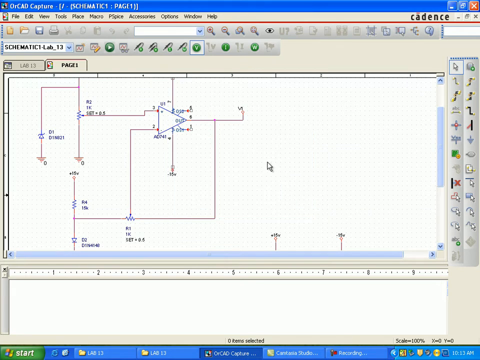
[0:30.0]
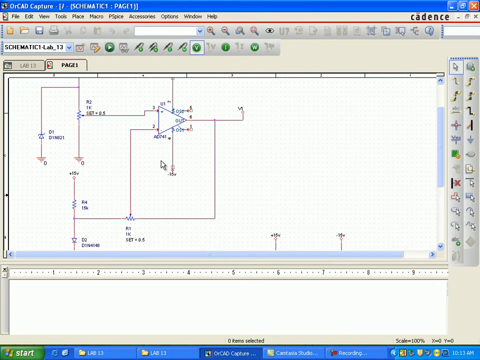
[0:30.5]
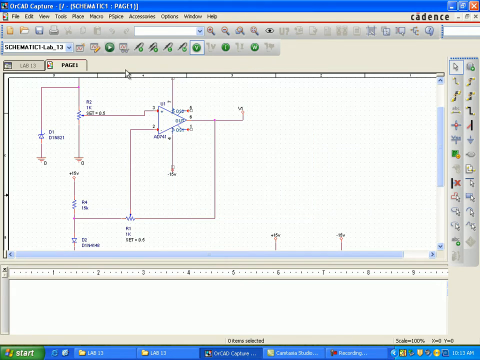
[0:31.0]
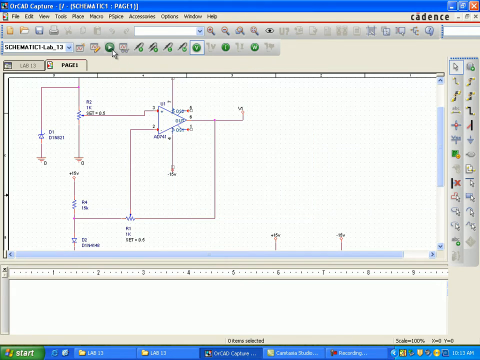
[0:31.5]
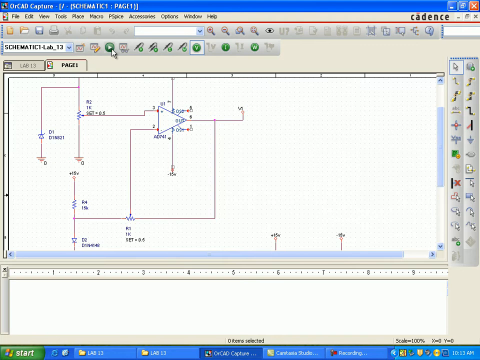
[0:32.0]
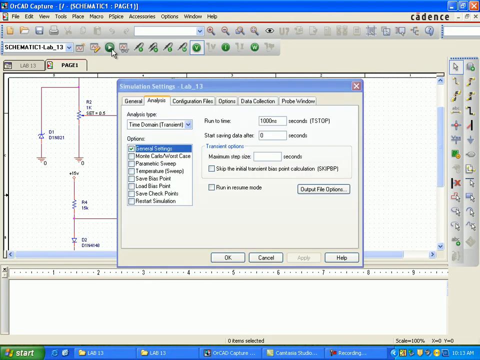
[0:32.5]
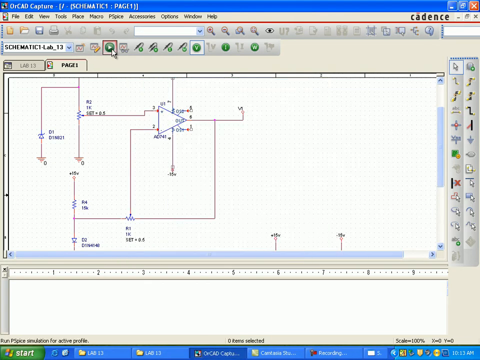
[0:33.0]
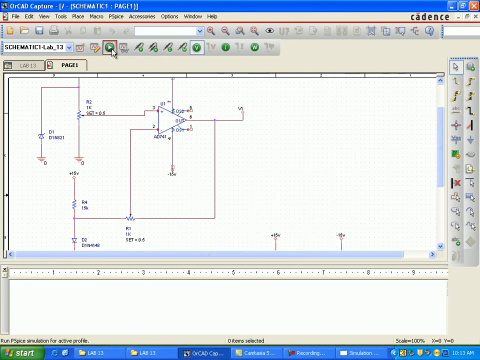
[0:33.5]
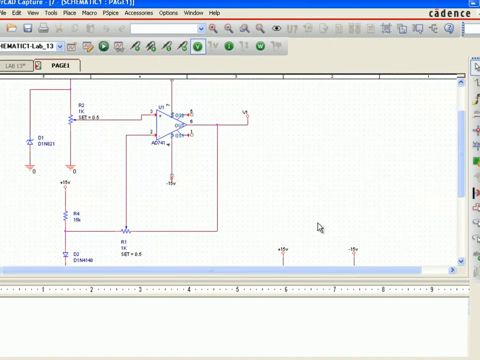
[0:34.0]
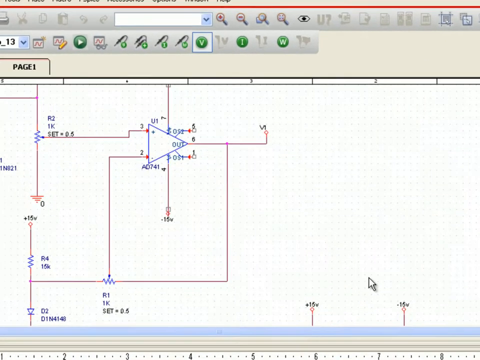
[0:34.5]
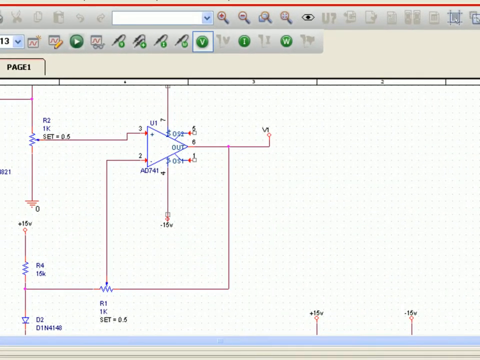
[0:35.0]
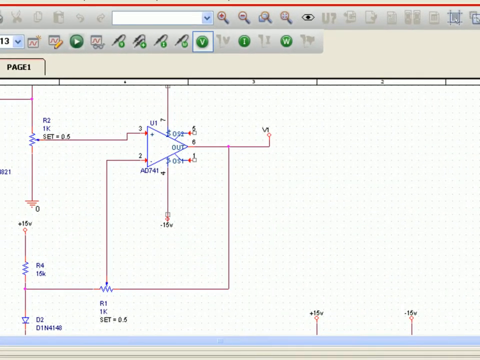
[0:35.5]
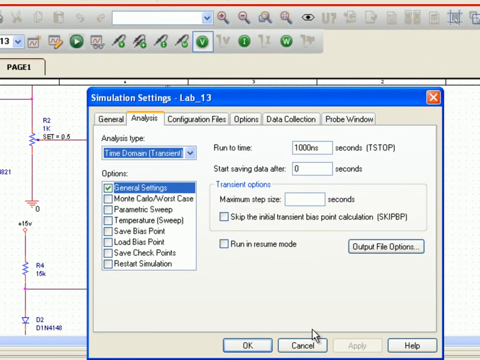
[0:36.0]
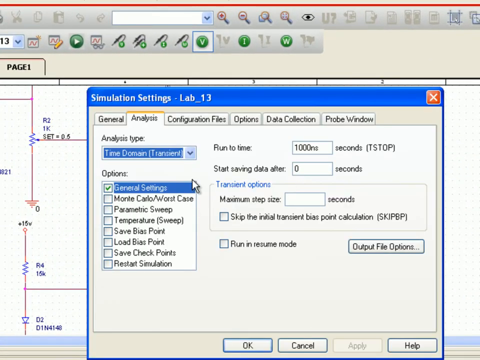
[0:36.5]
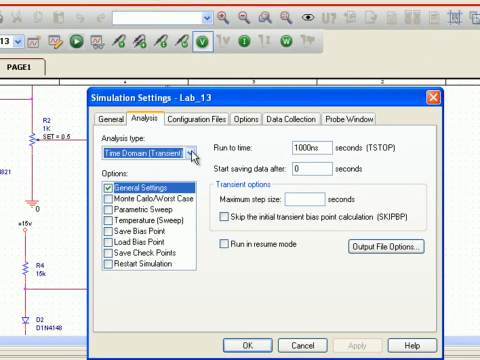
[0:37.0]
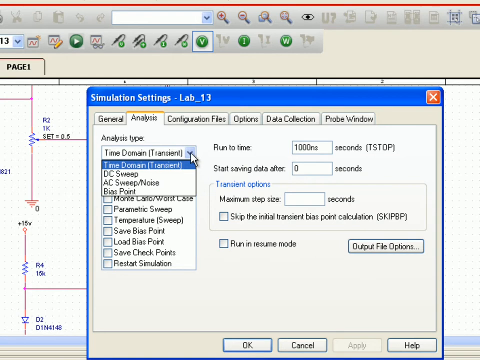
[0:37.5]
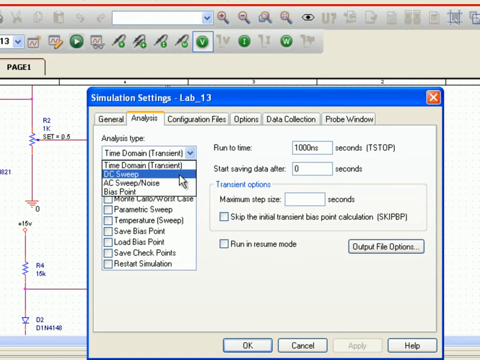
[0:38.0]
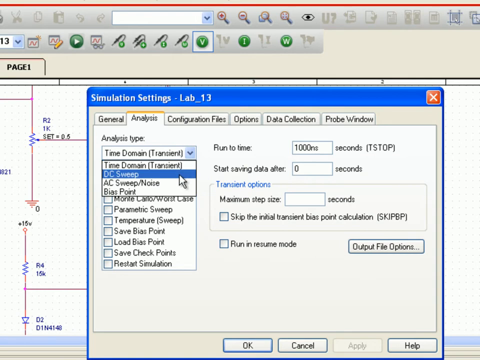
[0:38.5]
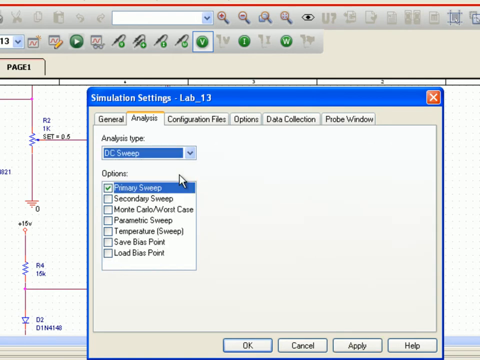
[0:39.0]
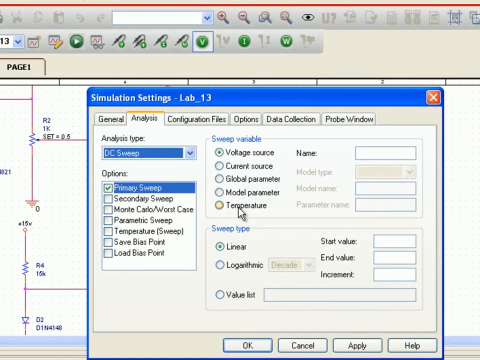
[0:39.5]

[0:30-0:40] The same layout remains on screen. The user clicks a play button at the top, which brings up a simulation settings tab specifically for the newly created Lab 13. They go to a drop-down bar for analysis type and click on DC Sweep. Then they click another button right next to it for a sweep variable and apparently click on temperature.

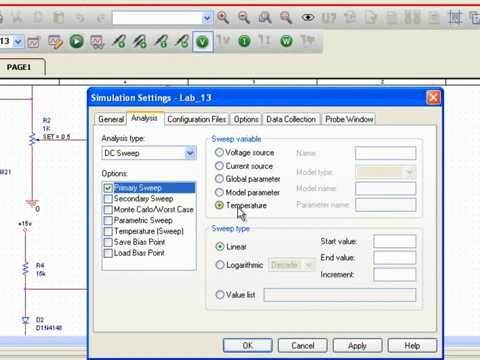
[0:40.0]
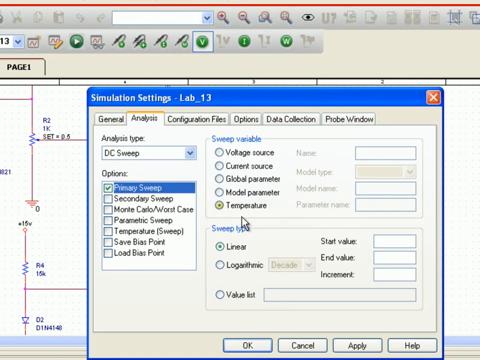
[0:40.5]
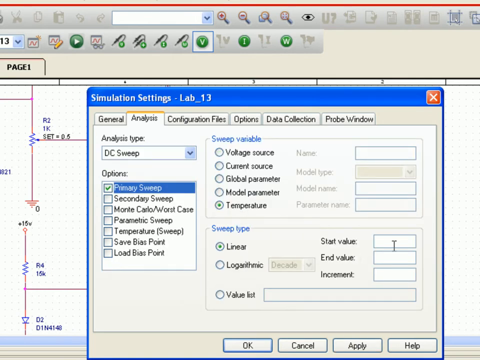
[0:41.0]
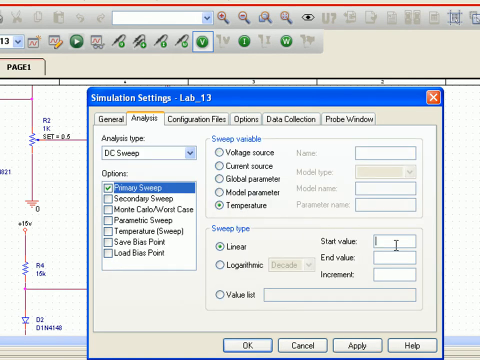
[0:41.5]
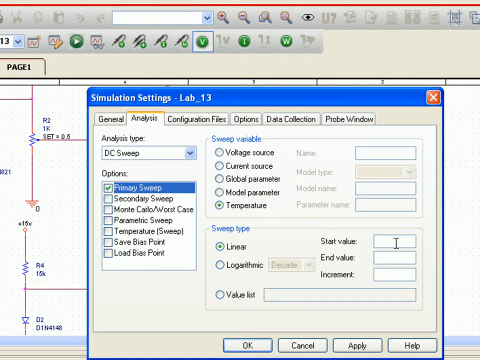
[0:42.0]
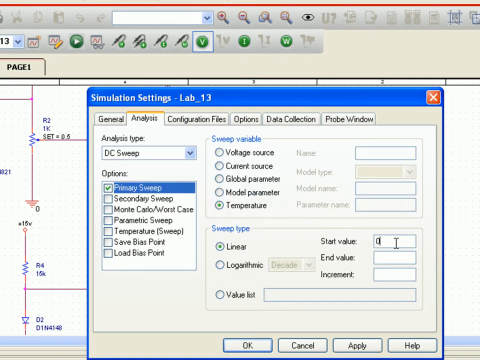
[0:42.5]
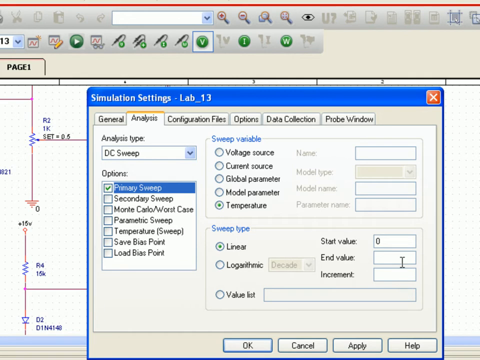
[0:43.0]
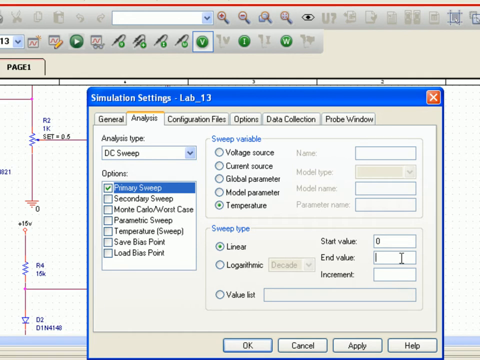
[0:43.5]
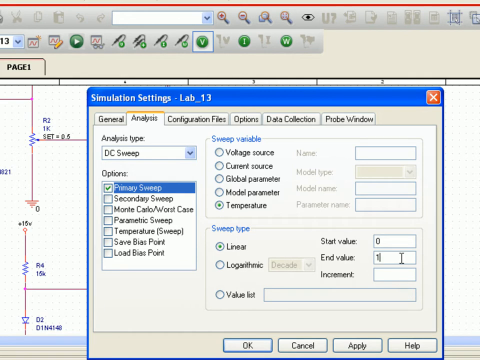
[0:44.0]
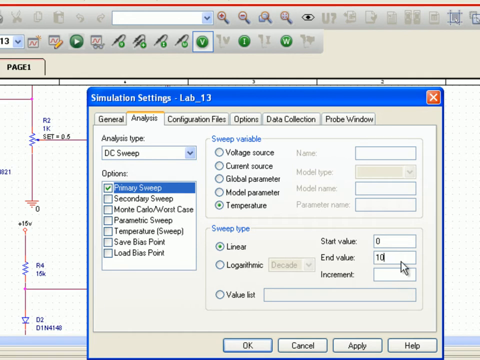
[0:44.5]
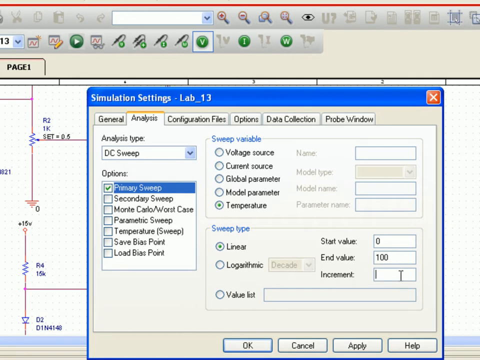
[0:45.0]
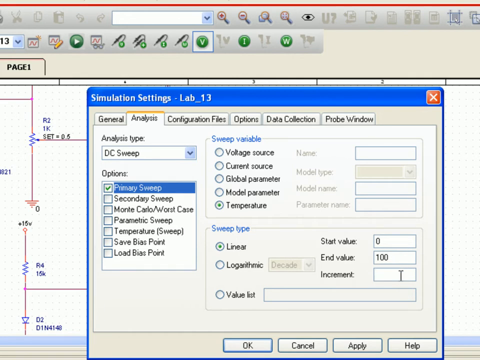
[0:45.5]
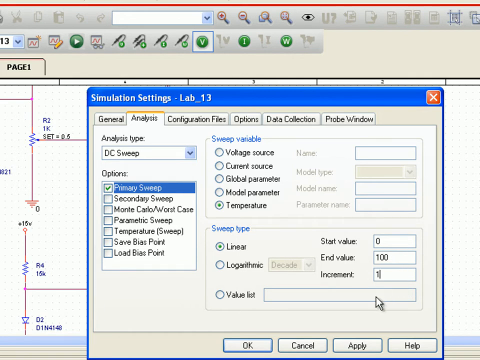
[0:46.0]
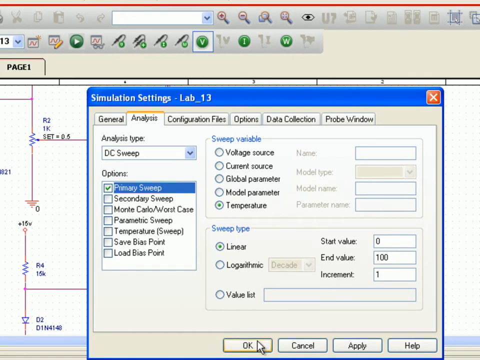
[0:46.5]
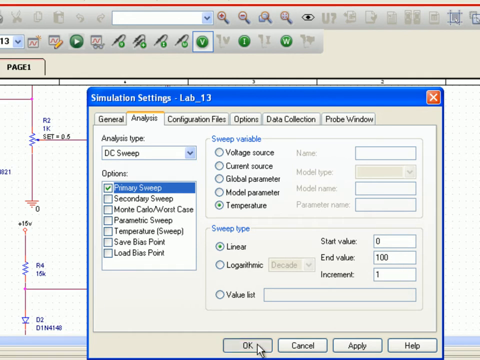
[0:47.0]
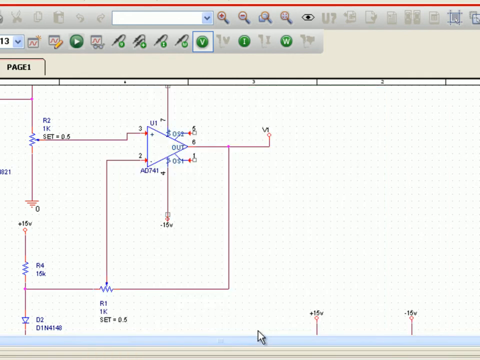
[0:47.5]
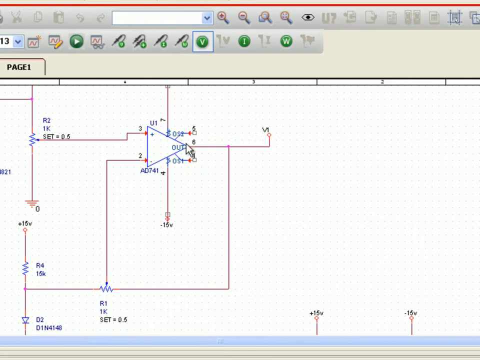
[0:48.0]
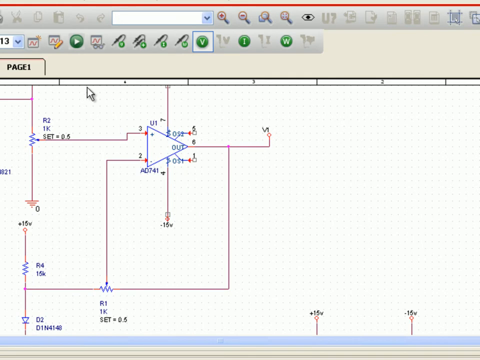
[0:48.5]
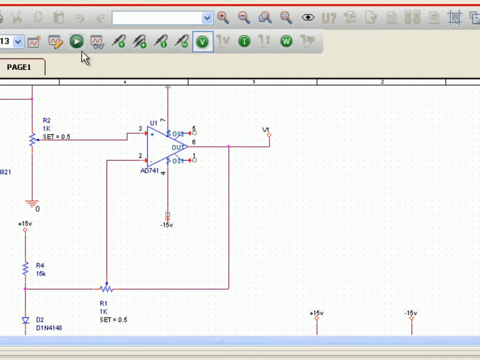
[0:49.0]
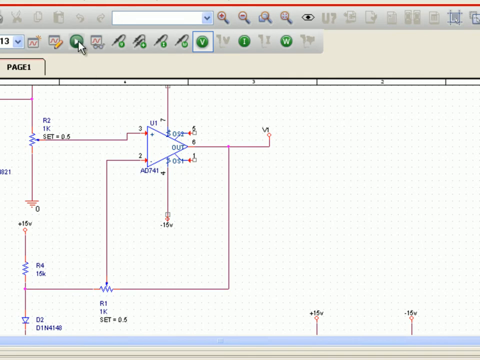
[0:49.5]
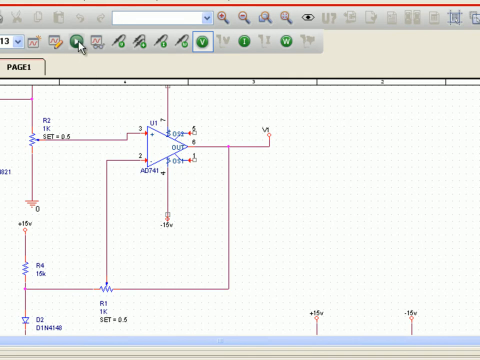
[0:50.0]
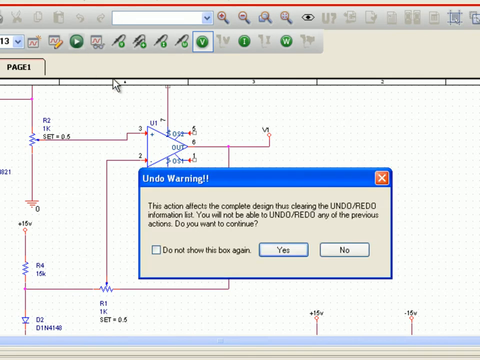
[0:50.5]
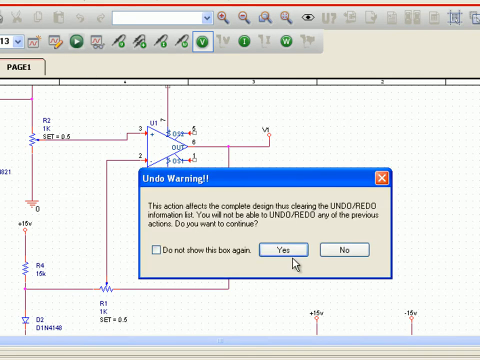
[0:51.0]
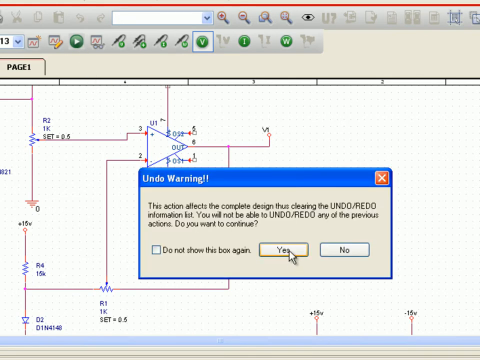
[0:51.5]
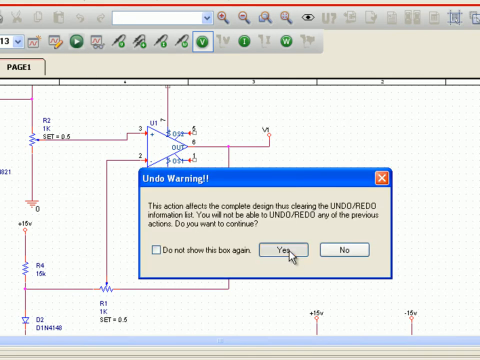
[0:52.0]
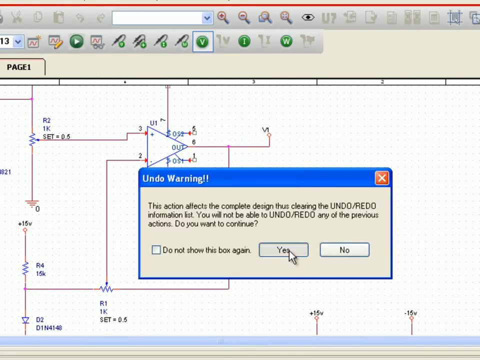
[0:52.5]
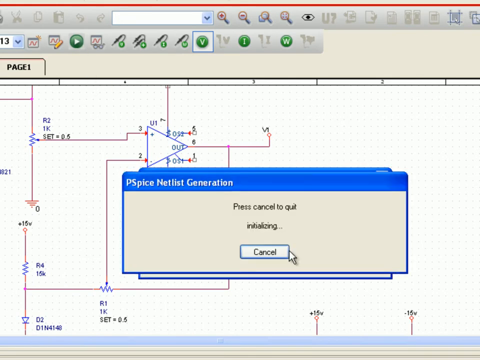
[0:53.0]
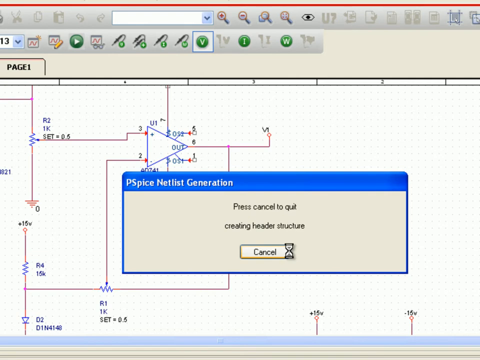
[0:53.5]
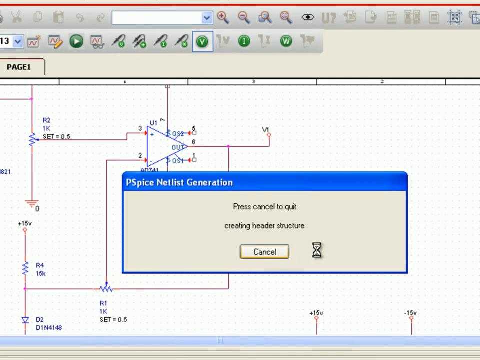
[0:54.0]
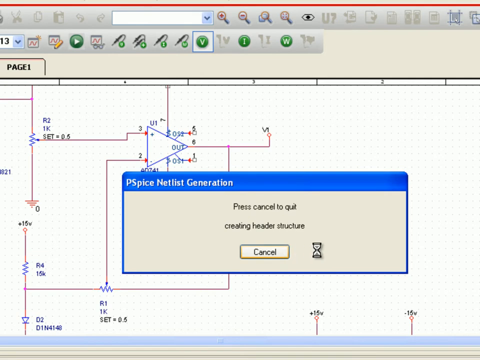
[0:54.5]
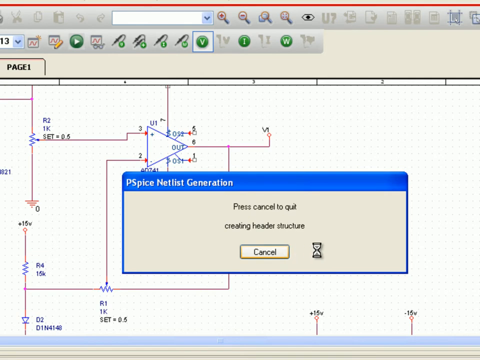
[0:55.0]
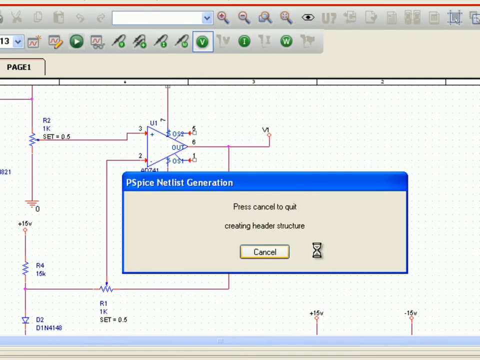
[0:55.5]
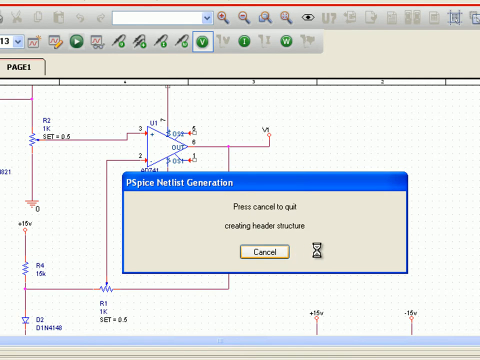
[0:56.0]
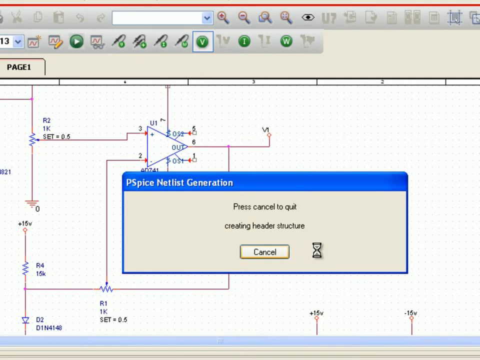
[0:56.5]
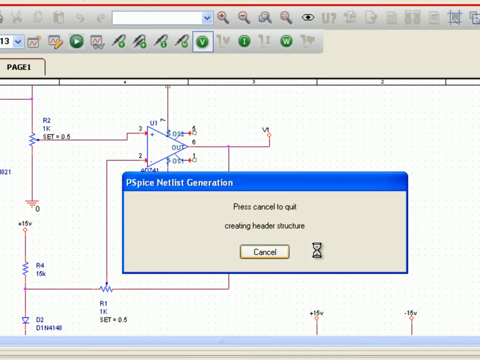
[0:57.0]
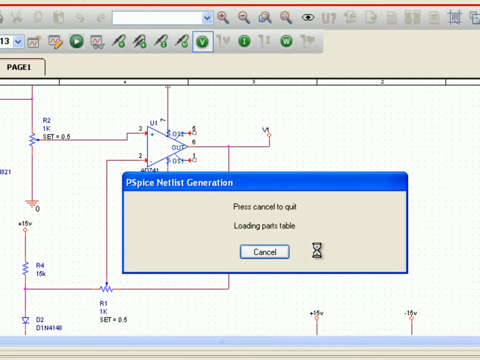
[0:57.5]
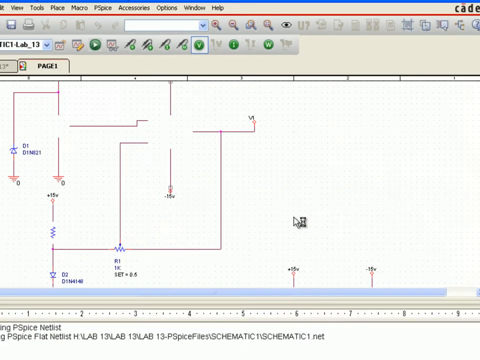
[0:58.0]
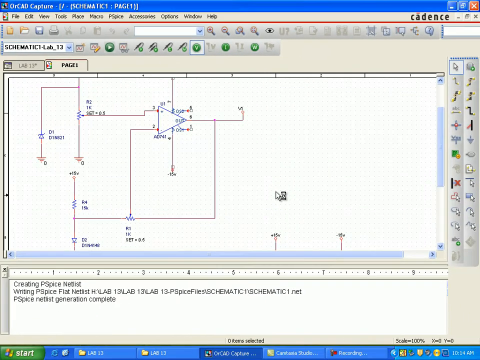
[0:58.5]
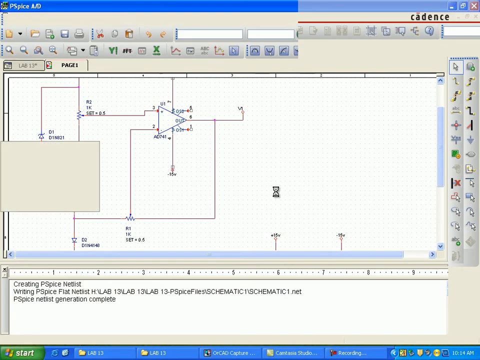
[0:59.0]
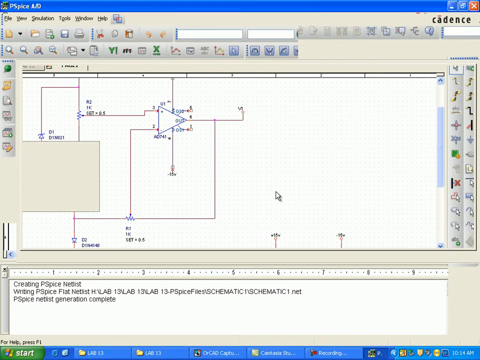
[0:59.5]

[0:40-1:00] The user continues typing values into the simulation settings, which have entries for start value, end value, and increment. They type 0 for the start value, 100 for the end value, and 1 for the increment. Then they close out of that and click the Play button again. A small warning window comes up that says "undo warning. This action affects the complete design, thus clearing the undo, redo information list. You will not be able to undo, redo any of the previous actions. Do you want to continue?" They click Yes. It then looks like the program is about to start, as the screen says "press cancel to quit, creating header structure" along with text mentioning PSPICE. This then kind of slowly disappears.